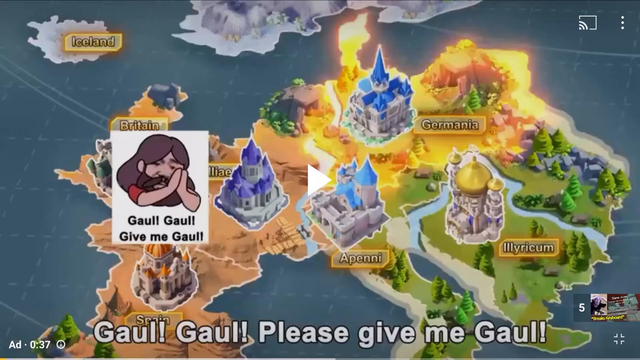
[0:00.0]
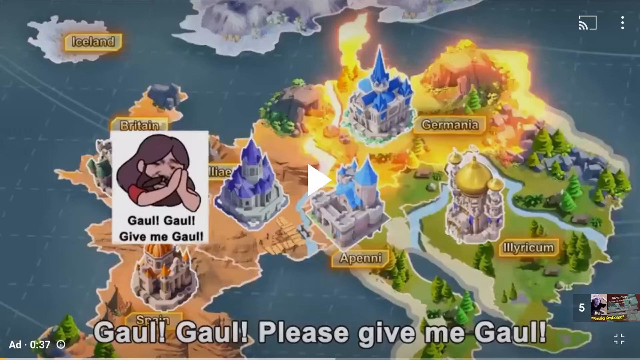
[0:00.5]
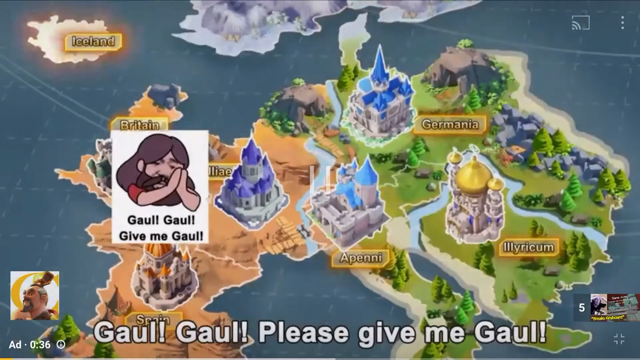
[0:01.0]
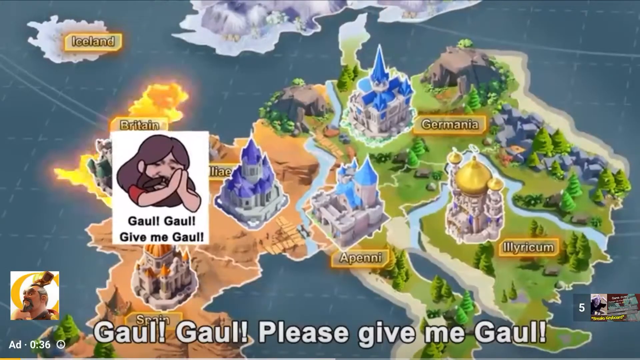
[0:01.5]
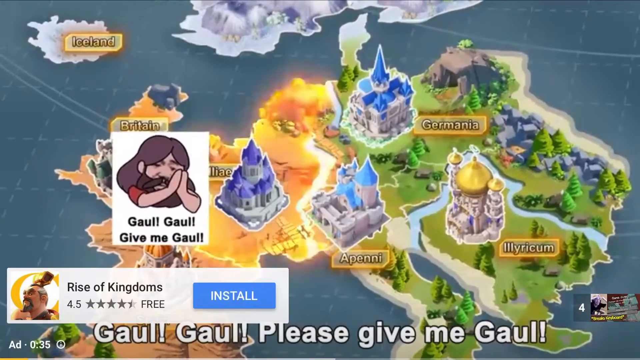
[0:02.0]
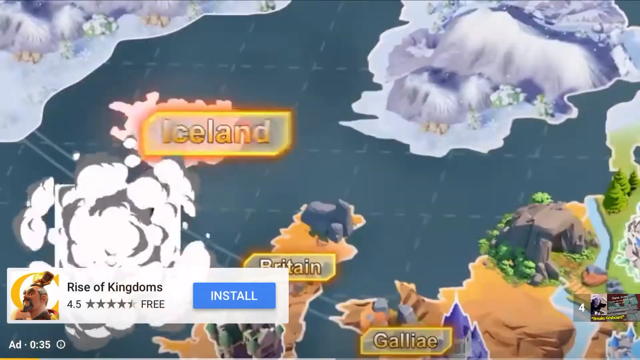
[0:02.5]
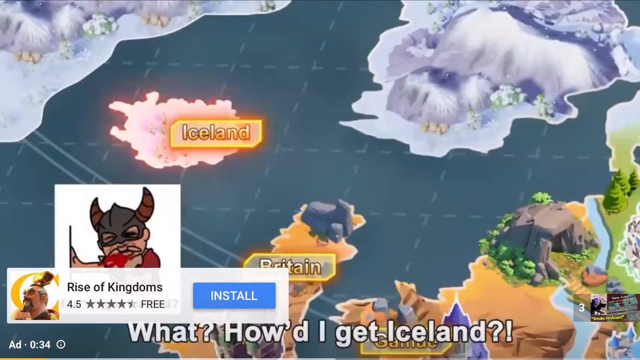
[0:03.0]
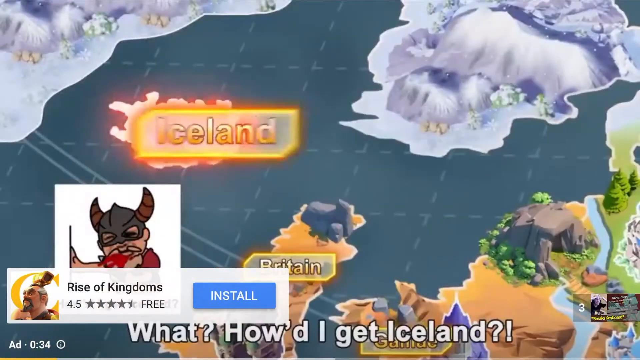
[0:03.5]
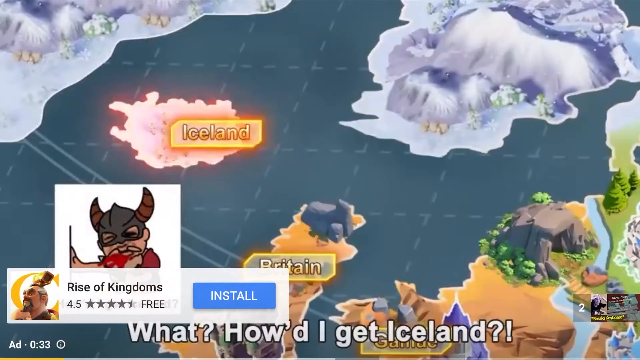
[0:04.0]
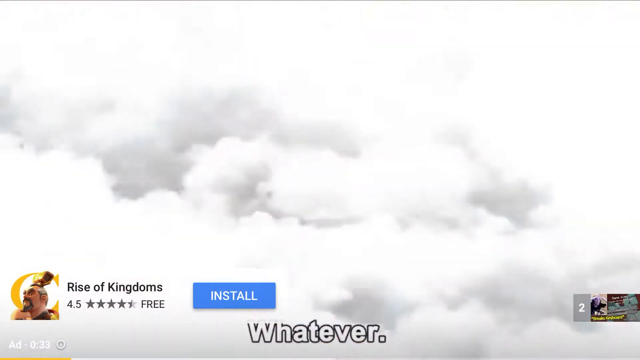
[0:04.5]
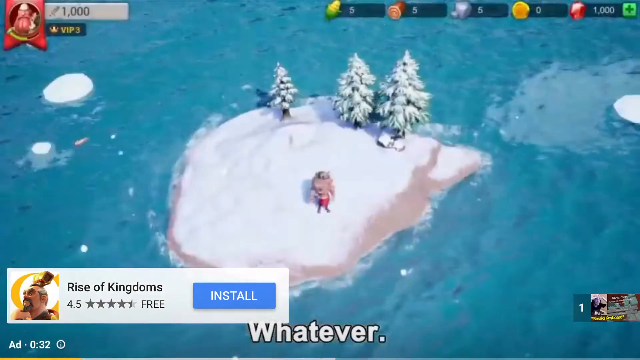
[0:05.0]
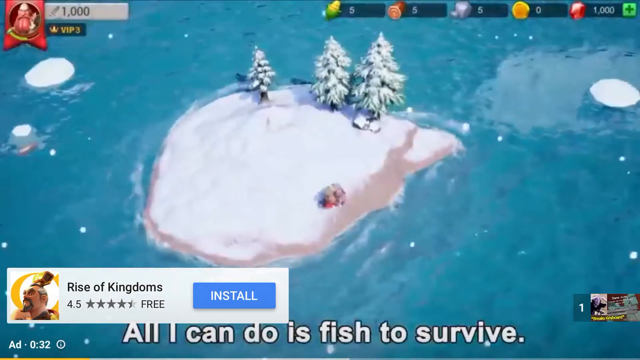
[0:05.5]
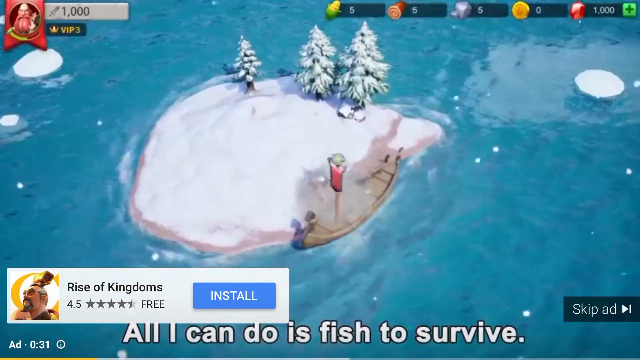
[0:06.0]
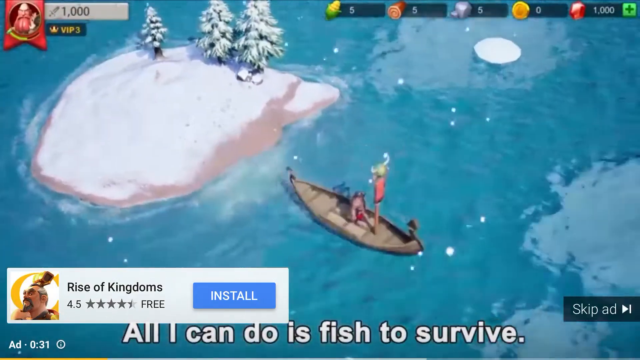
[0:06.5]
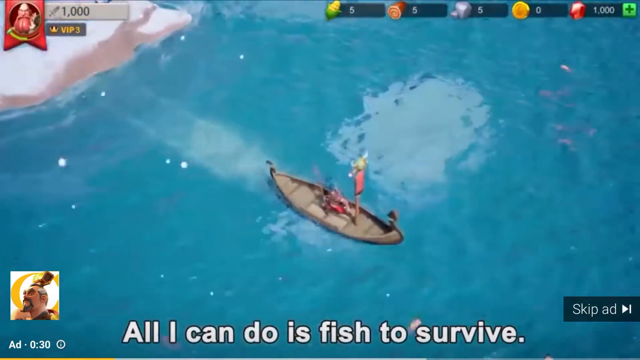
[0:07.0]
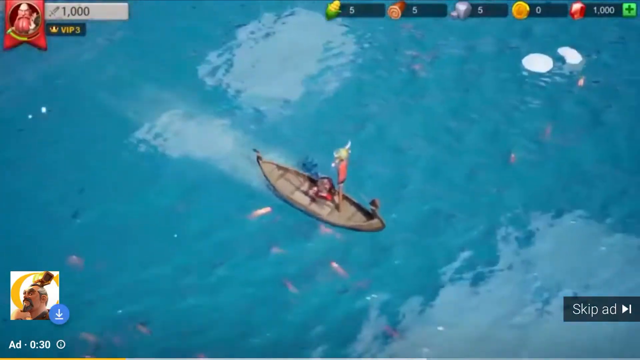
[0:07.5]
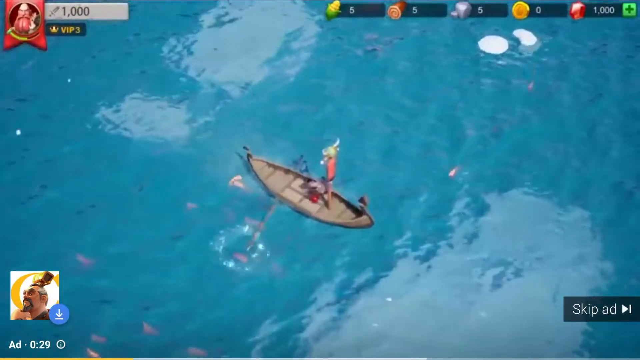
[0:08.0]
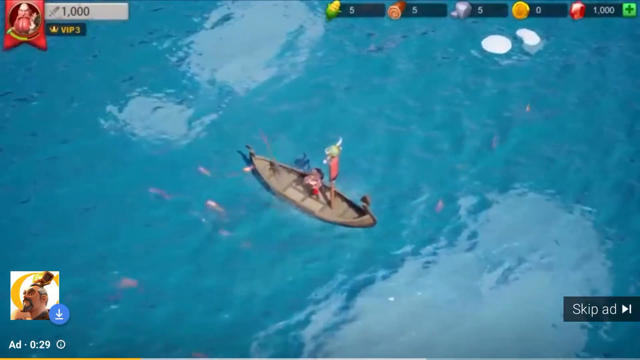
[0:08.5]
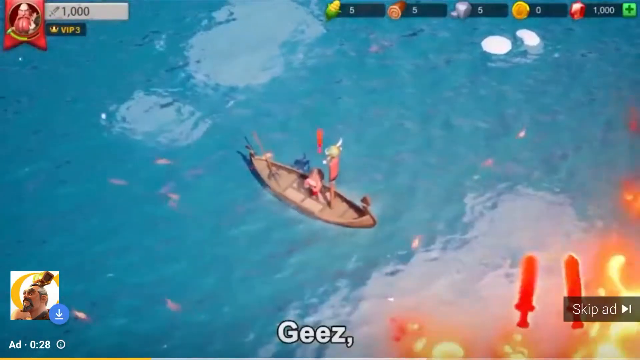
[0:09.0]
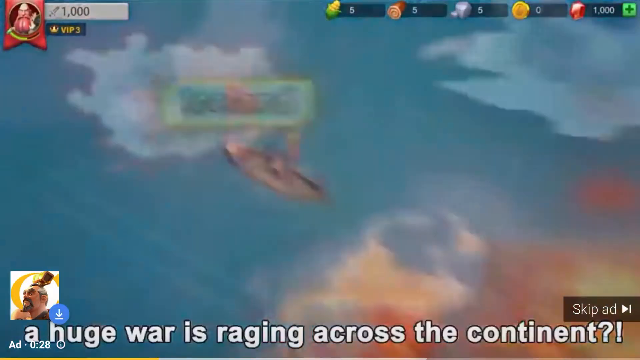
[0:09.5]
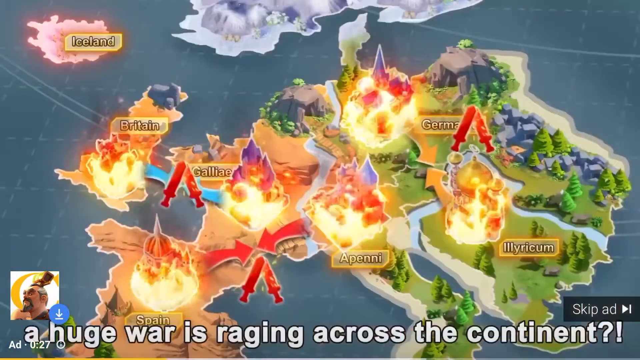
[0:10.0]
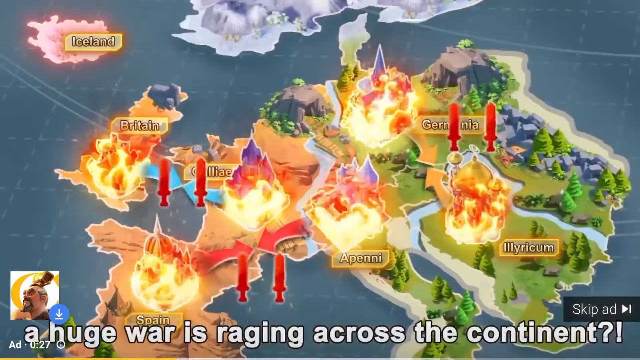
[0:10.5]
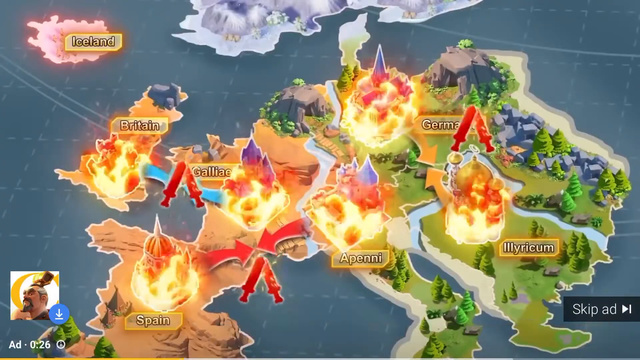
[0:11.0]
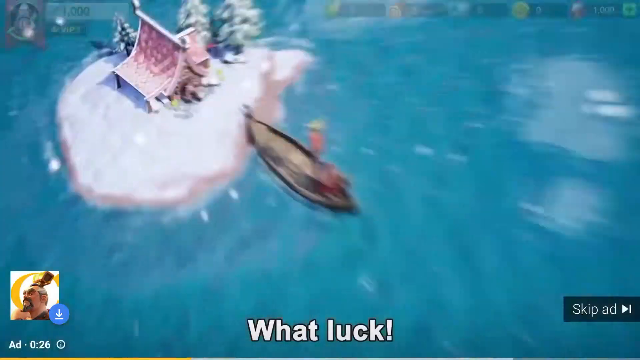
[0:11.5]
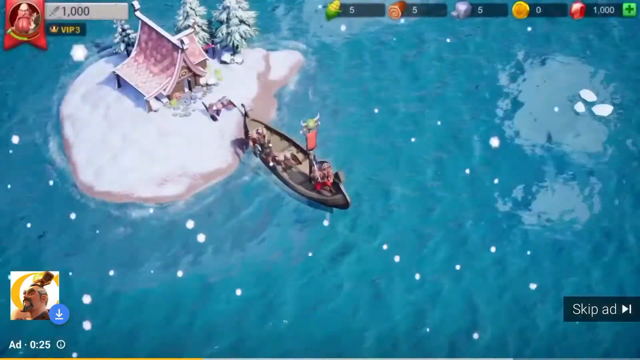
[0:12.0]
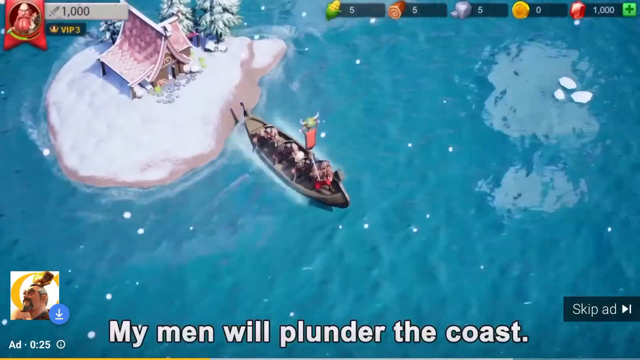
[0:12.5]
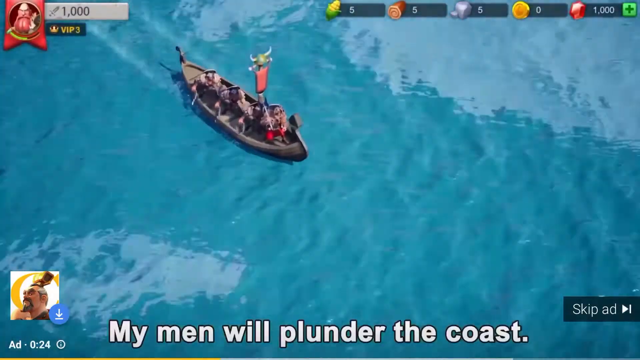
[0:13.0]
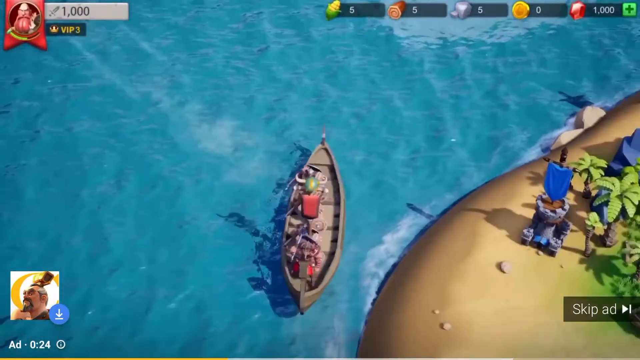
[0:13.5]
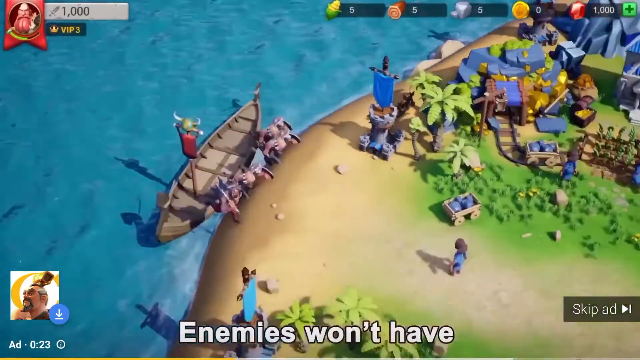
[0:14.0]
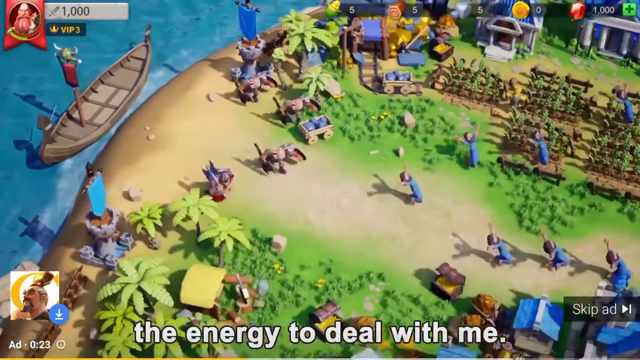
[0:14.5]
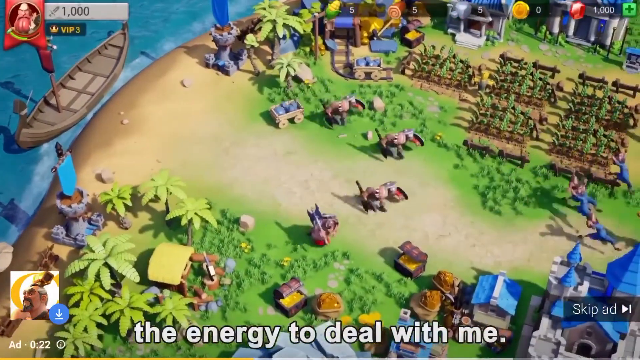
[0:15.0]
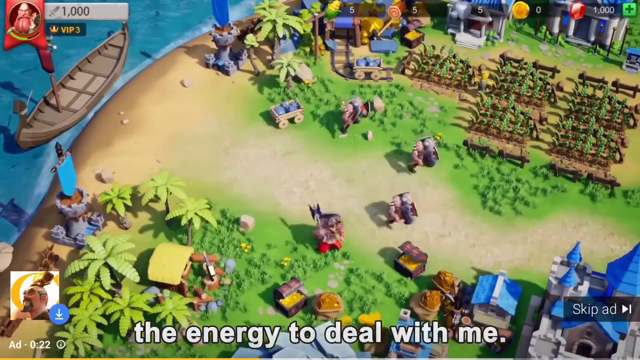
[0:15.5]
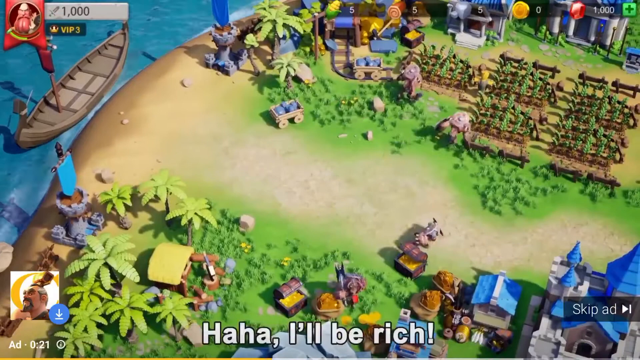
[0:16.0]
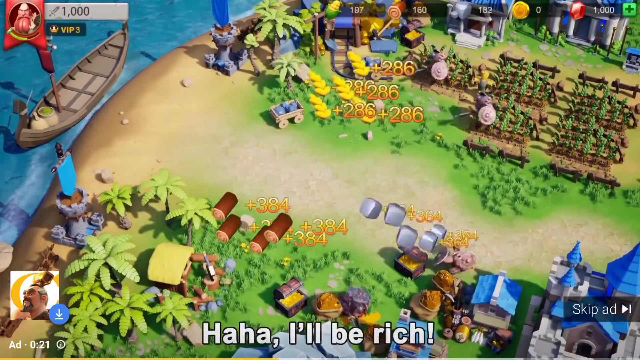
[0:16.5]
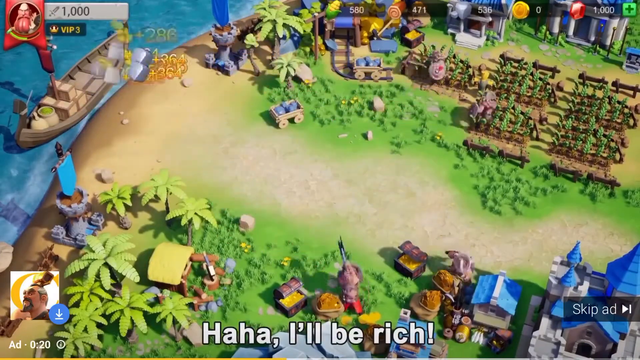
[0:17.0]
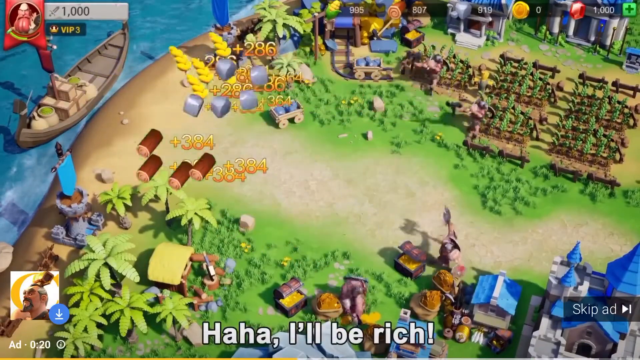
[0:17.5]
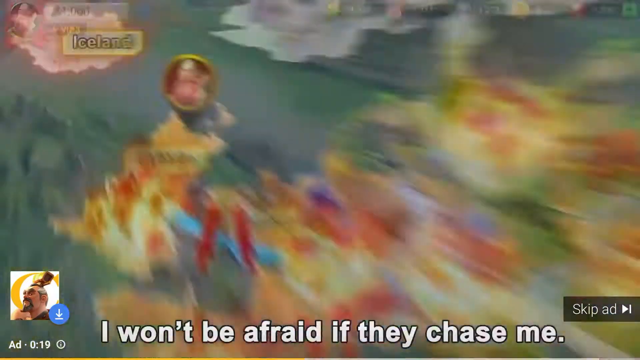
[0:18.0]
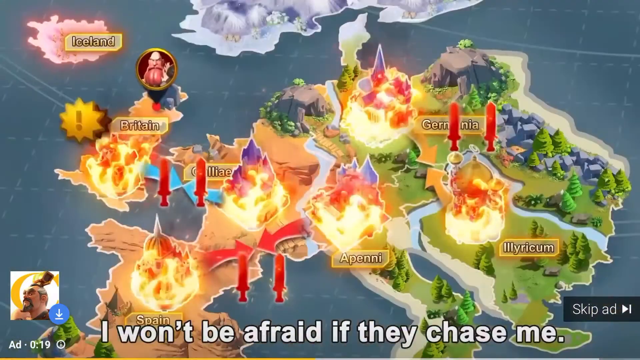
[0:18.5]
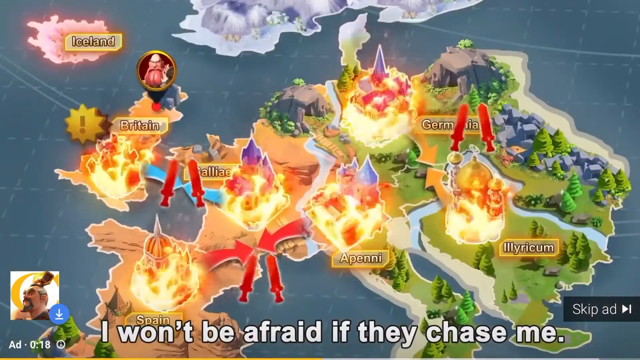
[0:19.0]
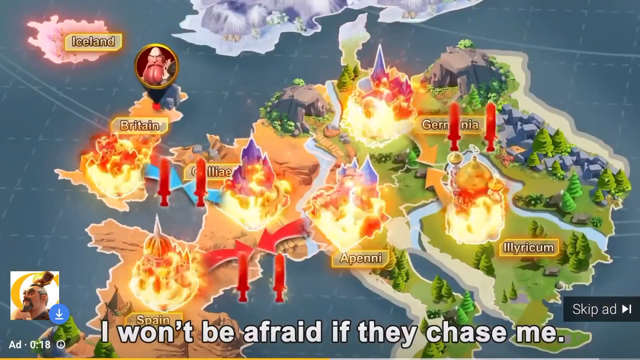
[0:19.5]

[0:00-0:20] A still, animated picture shows a body of European areas surrounded by water. The map is apparently make-believe, since its brightly colored landmasses do not have shapes that match the present day. Labels read "Germania," "Il Rissum" and "Apennae," and the words "Britain" and "Iceland" are visible, so some of the names are current even though the layout of the land is not. Inset in the picture of the continent is a person in a praying position: only his head, arms and hands are visible, with his hands in front of his face as if praying. Underneath are the words "Gaul, Gaul, give me Gaul."